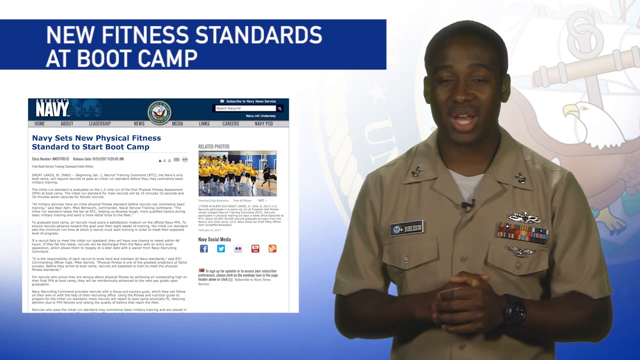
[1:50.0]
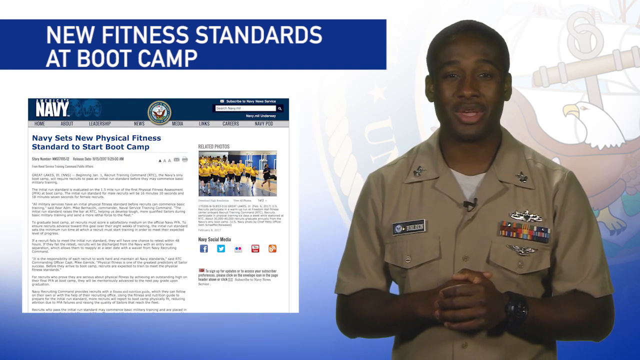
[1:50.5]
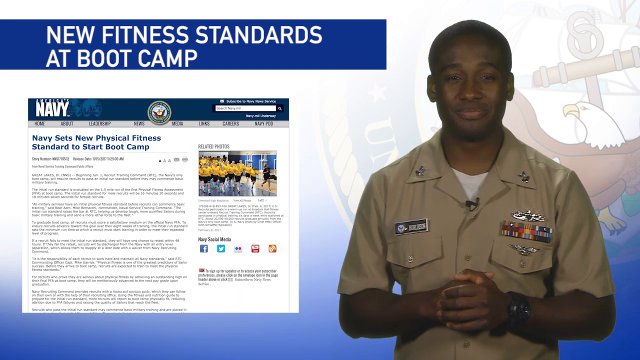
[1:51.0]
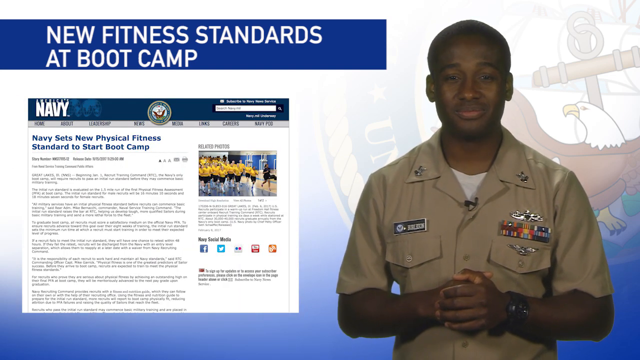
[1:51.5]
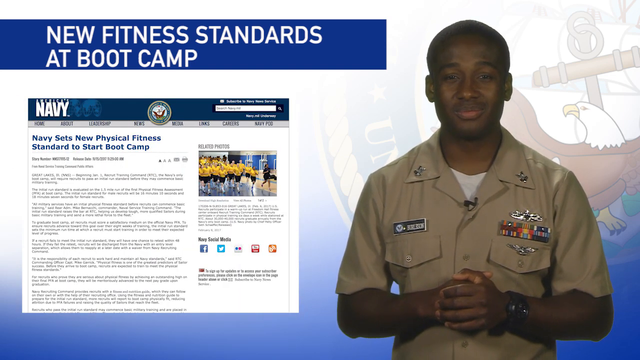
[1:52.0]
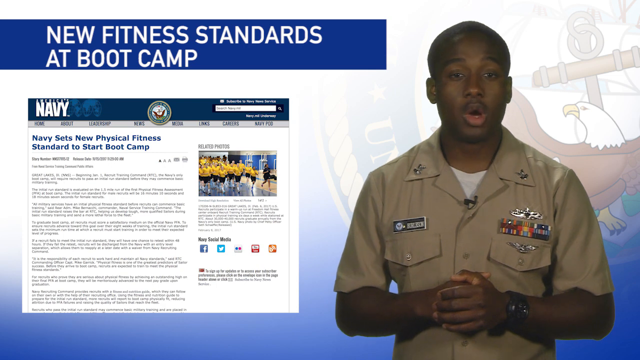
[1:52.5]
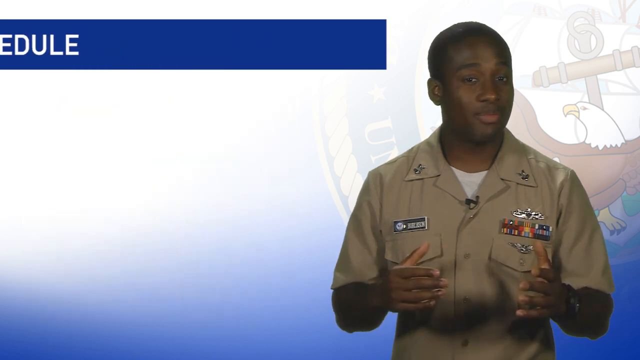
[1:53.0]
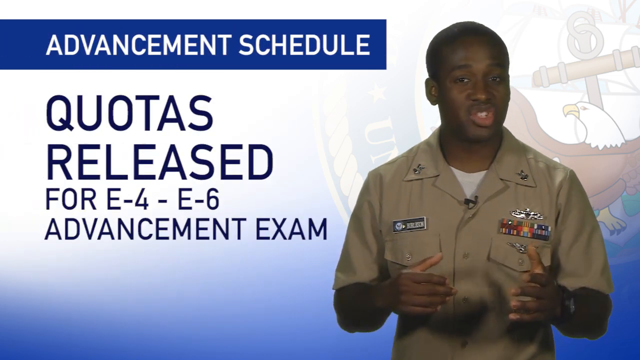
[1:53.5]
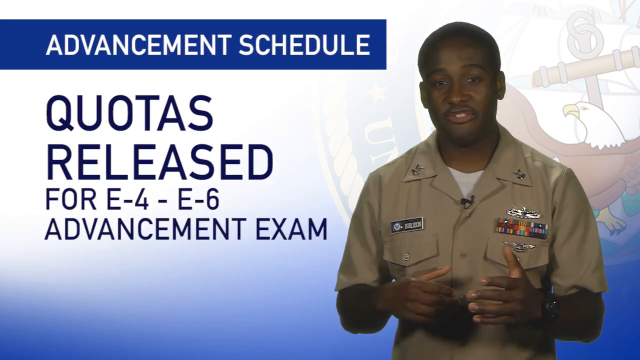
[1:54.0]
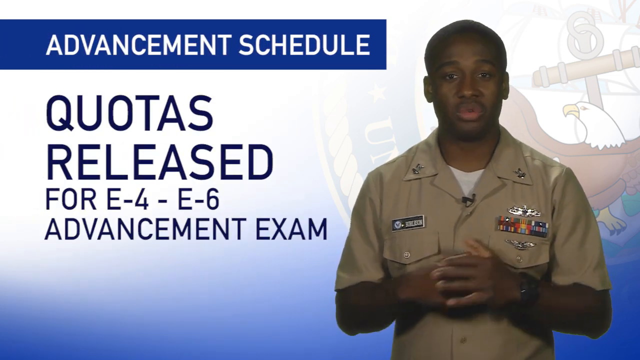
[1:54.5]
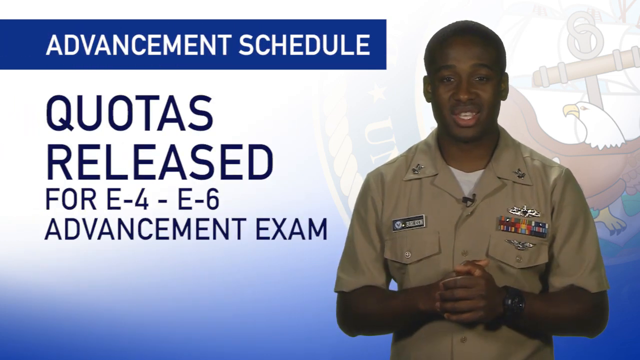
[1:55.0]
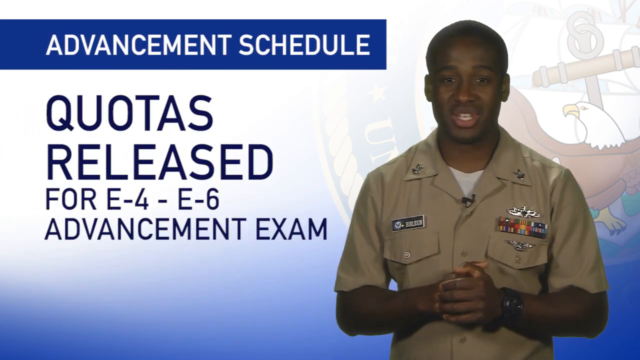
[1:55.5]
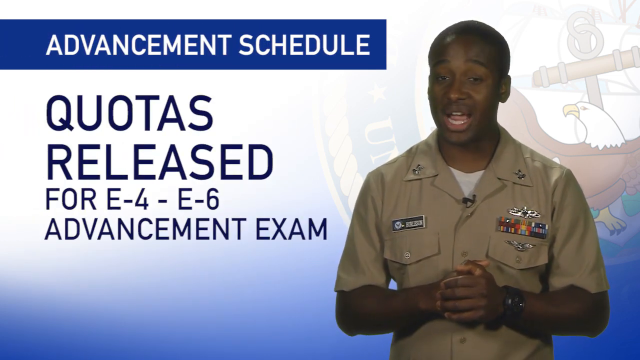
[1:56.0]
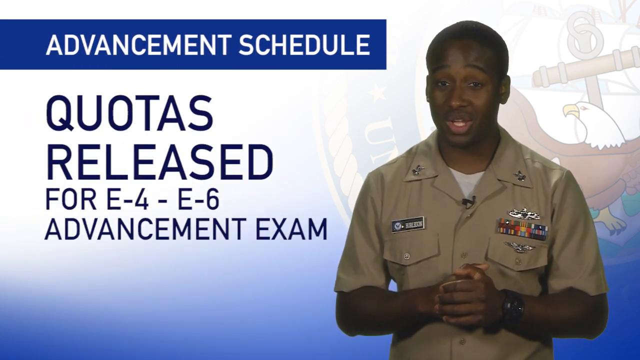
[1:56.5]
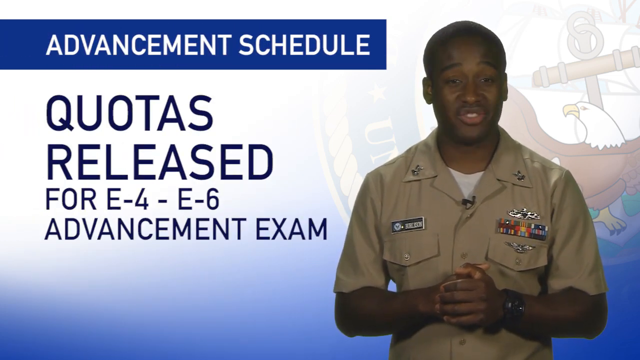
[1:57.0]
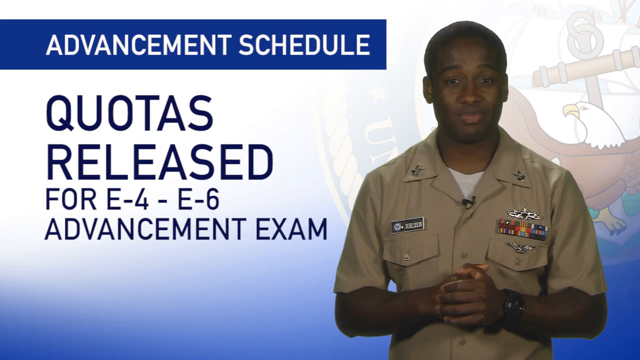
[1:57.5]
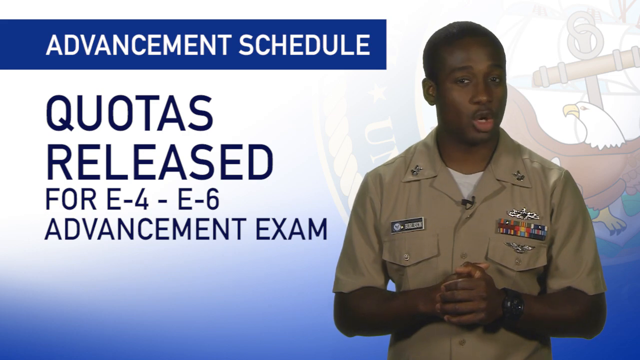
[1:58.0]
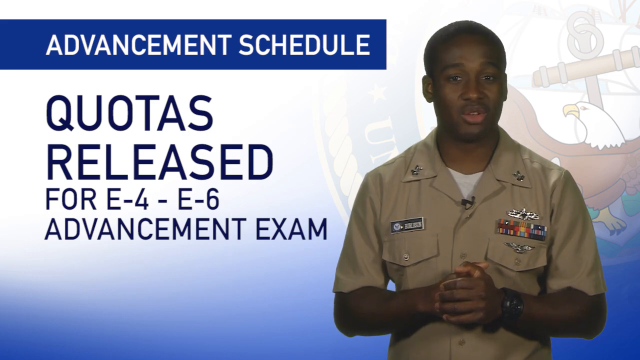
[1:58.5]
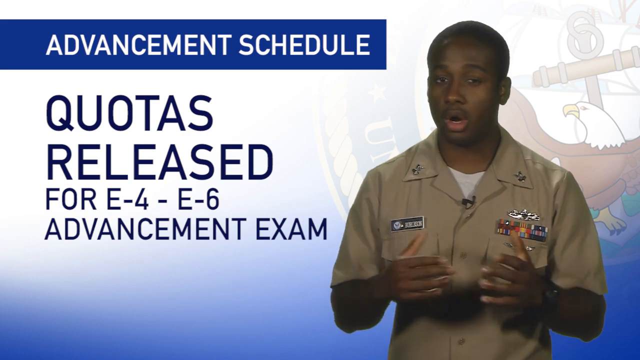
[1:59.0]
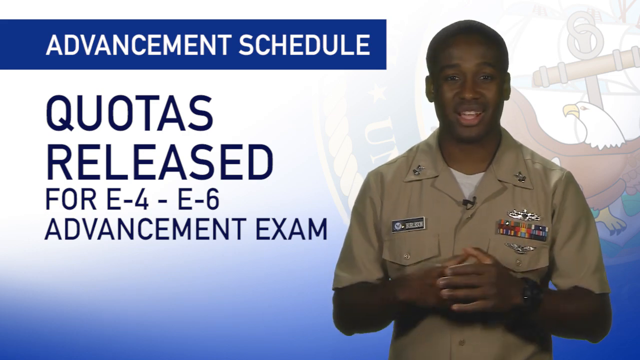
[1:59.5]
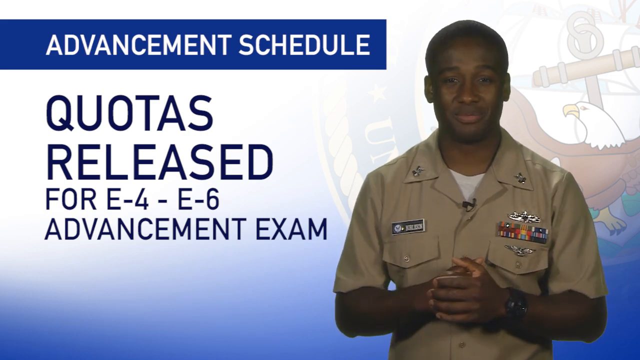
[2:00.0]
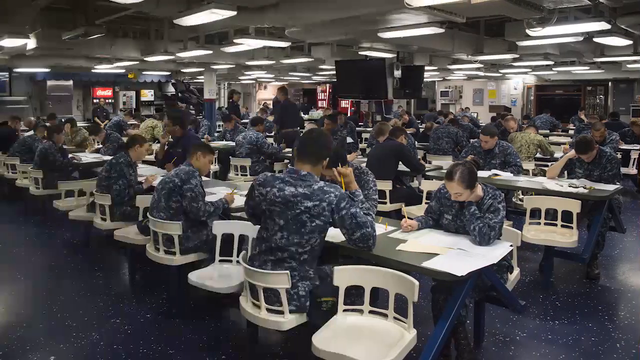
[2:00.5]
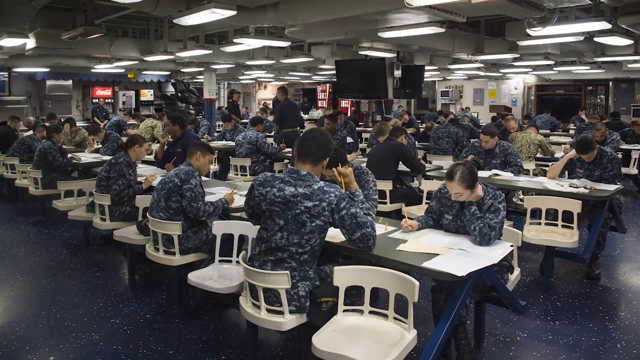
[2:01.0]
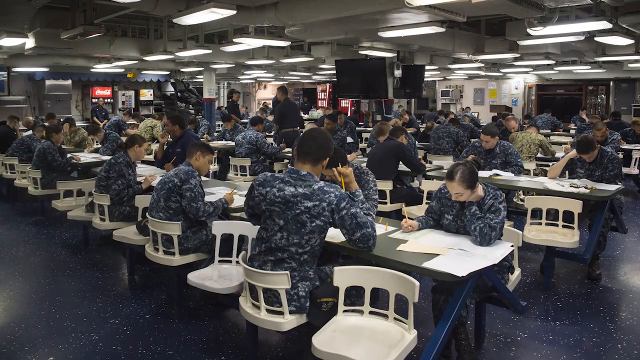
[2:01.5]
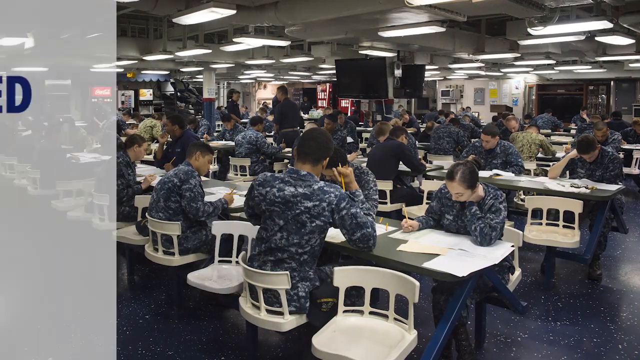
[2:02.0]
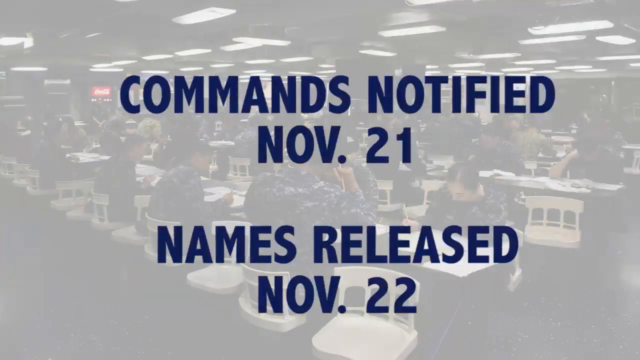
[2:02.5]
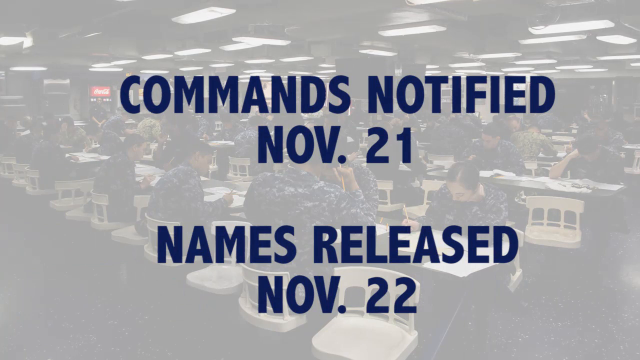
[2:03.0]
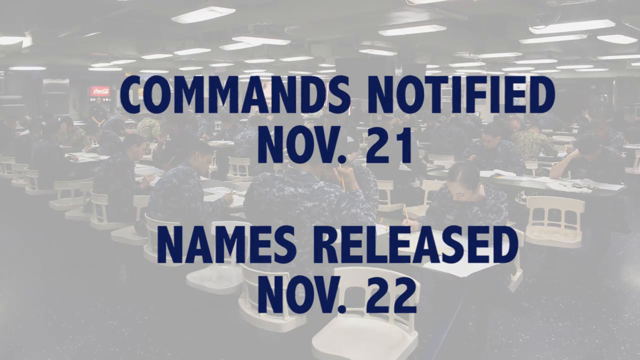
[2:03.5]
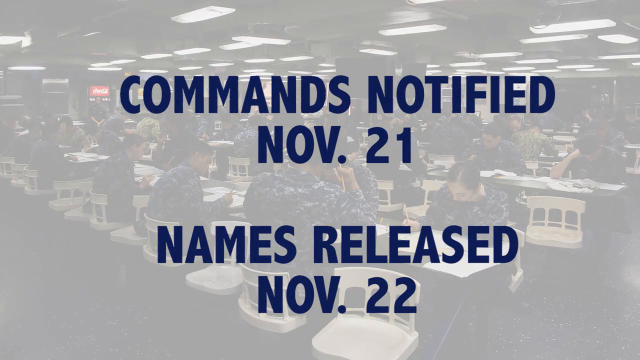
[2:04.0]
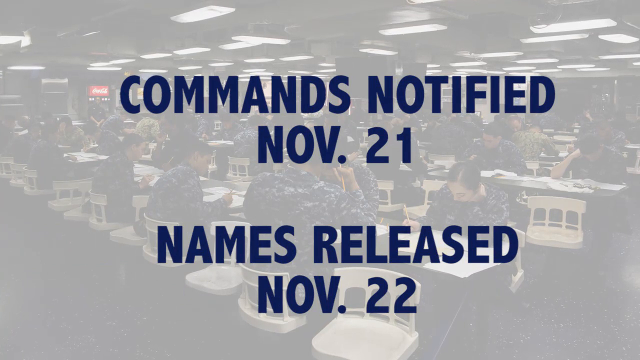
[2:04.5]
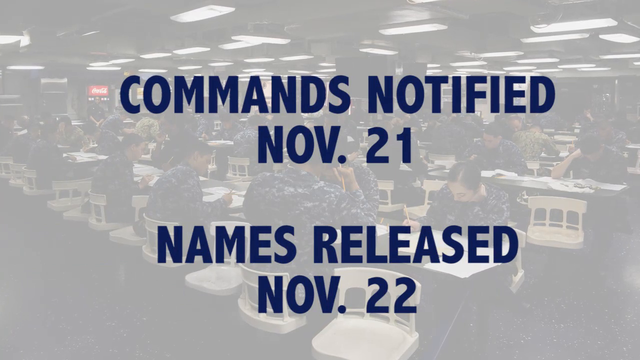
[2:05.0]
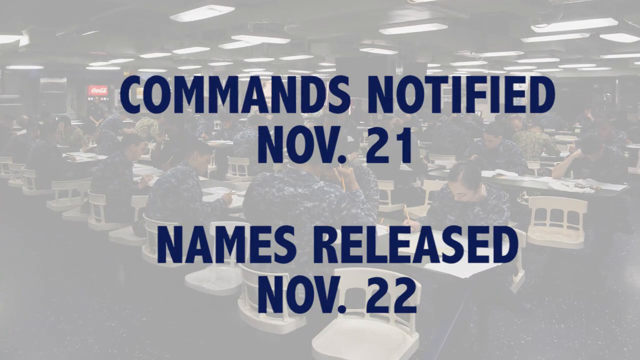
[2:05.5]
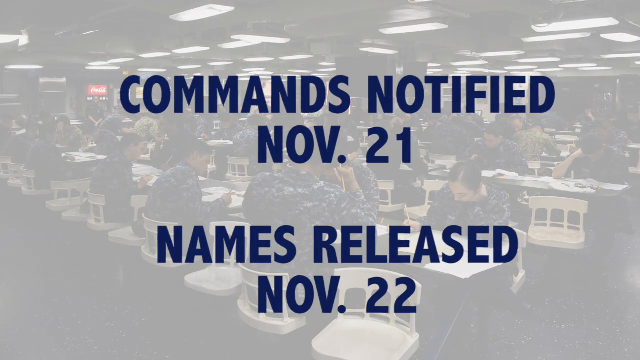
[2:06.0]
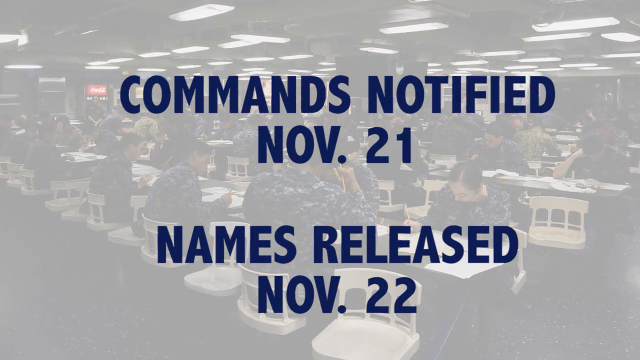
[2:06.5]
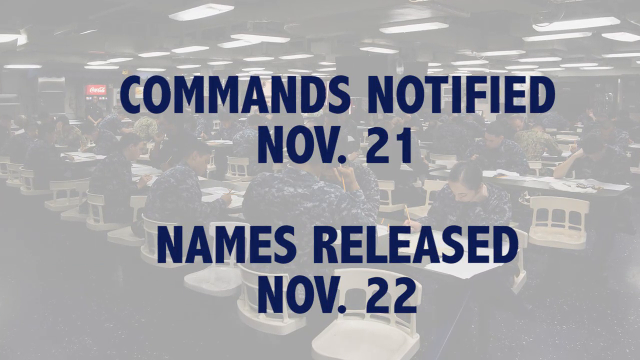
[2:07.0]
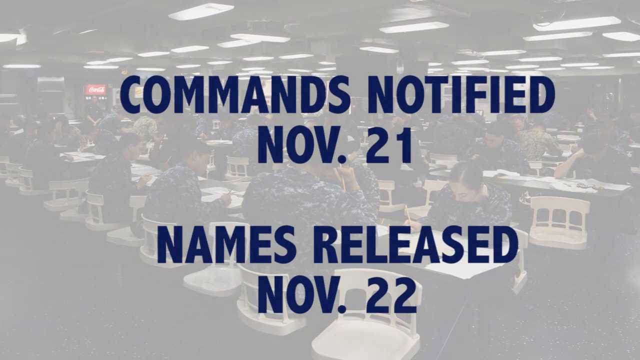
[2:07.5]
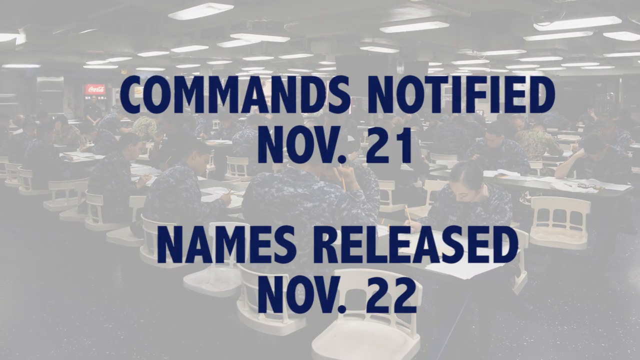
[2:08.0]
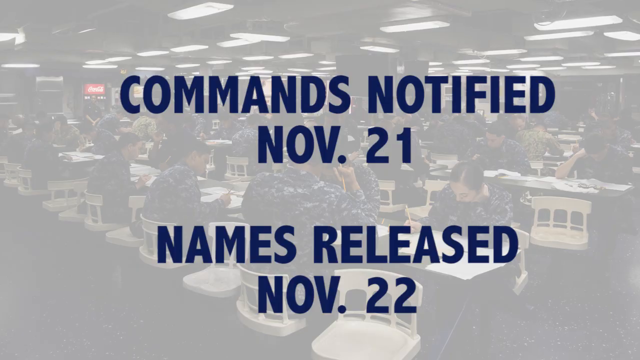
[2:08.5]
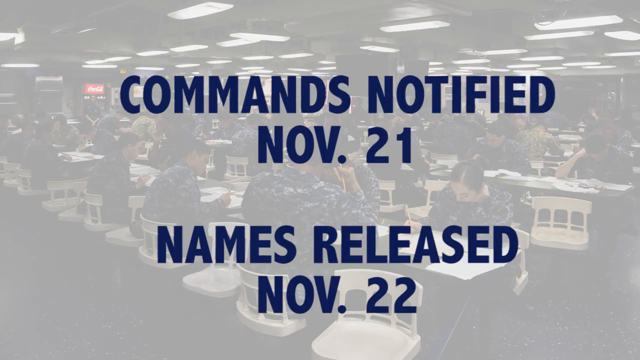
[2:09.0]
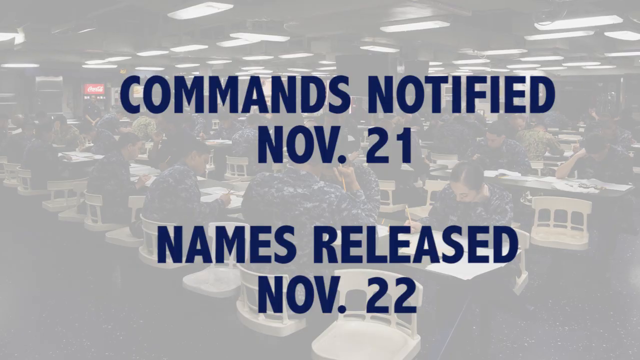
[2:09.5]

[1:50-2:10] A young Black man holds his hands together. He wears a watch and a brown shirt with medals on his chest and his name on the other side, has a buzz cut, and speaks in a welcoming manner. At the top of the screen, white writing in a blue box reads "New fitness standards at bootcamp," and the background shows the United States government logo with an eagle. On the left of the screen, to the man's right, a Navy website is open with the headline "Navy sets new physical fitness standards to start bootcamp." The text then changes to "Advancement schedule," with "Quotas released for E4-E6 advancement exam" underneath, as the man keeps talking and gesturing in a friendly manner. The screen then shows soldiers in blue camouflage gear all sitting at tables doing what looks like an exam. Large TV screens in the room are all turned off, and there seem to be instructors around watching over them. The room is packed, and everybody seems involved in what they are doing and not speaking to each other. Blue text on a white background then mentions commands being notified November 21st and a release November 22nd, alongside the shot of the soldiers at the tables. The last shot shows an army soldier pinning a medal on a younger recruit, who looks happy but concentrating.